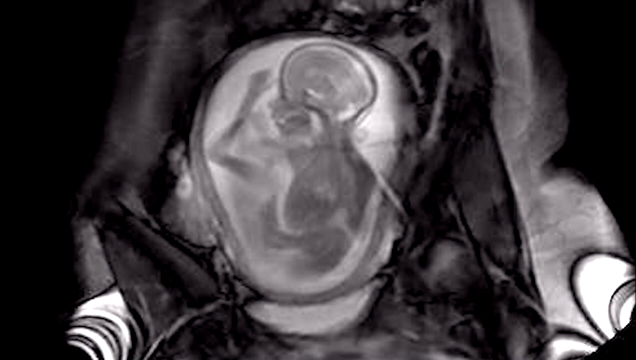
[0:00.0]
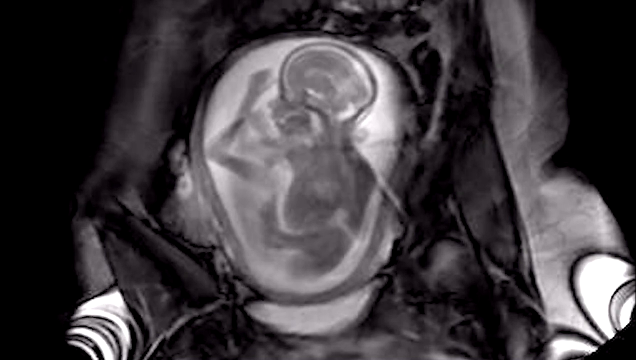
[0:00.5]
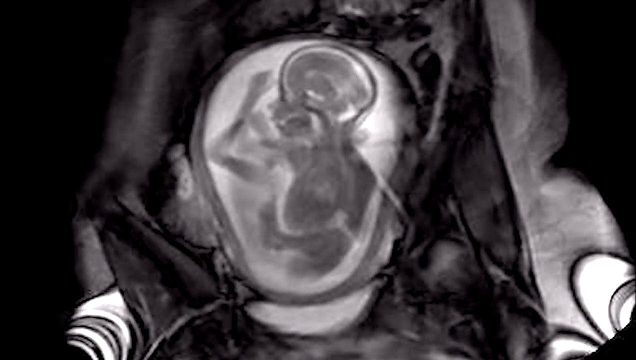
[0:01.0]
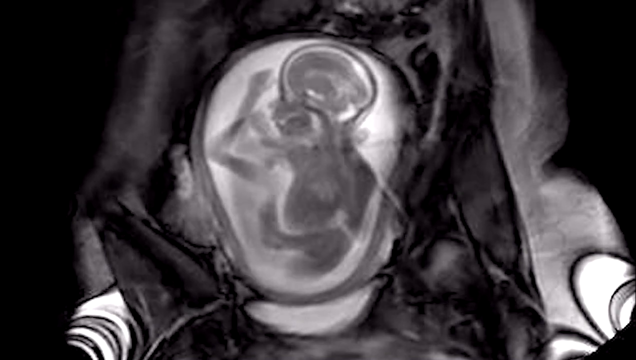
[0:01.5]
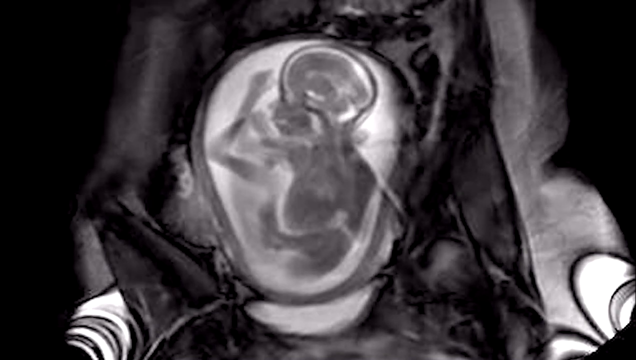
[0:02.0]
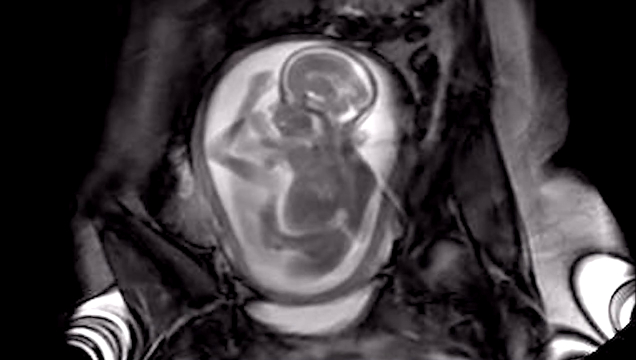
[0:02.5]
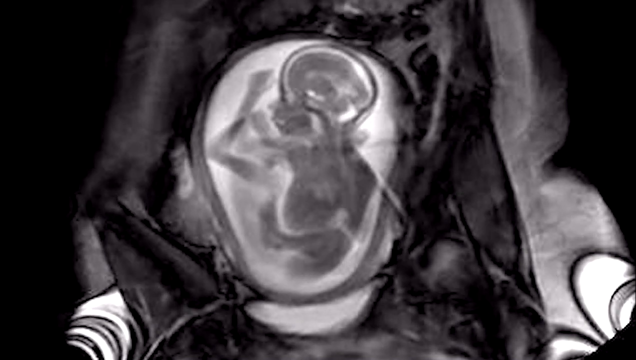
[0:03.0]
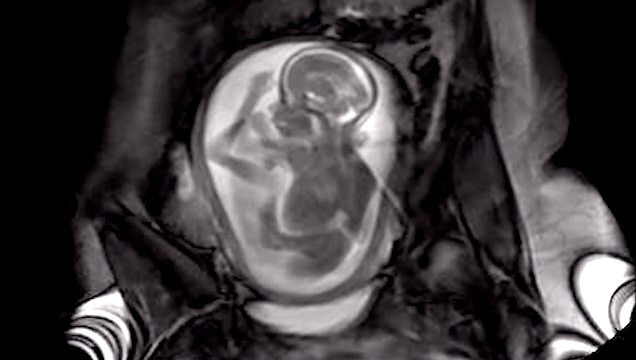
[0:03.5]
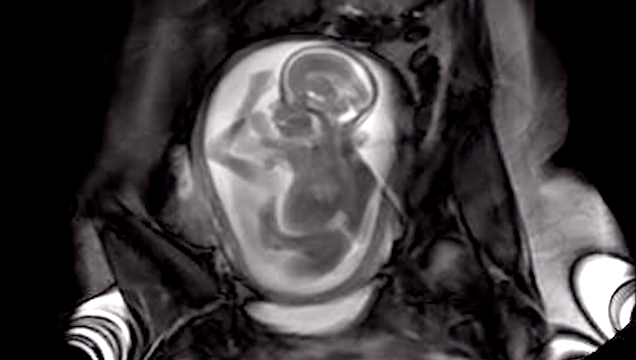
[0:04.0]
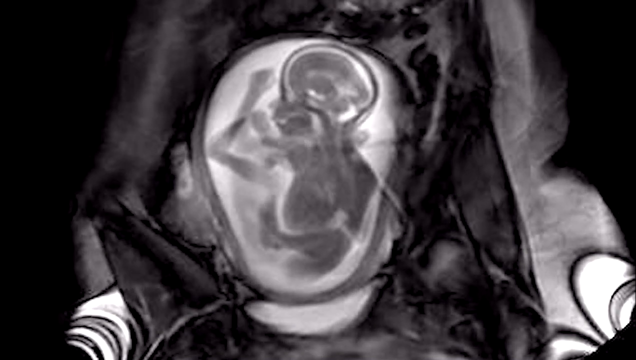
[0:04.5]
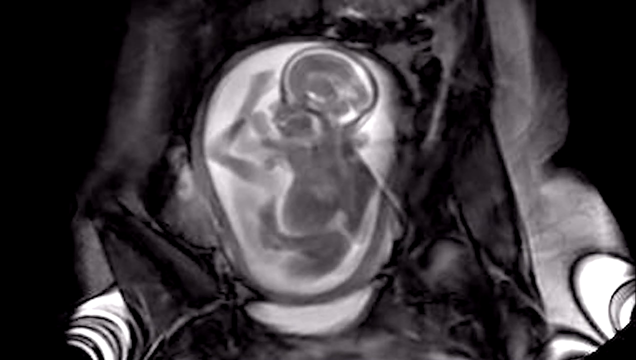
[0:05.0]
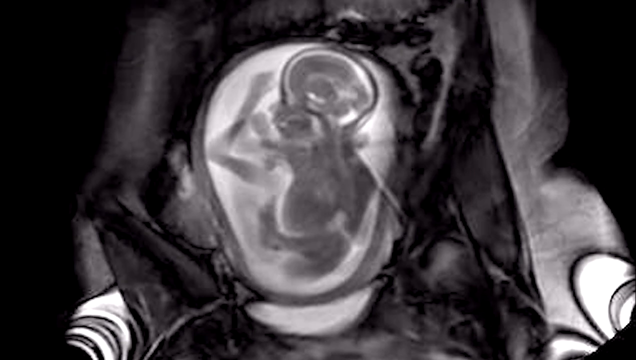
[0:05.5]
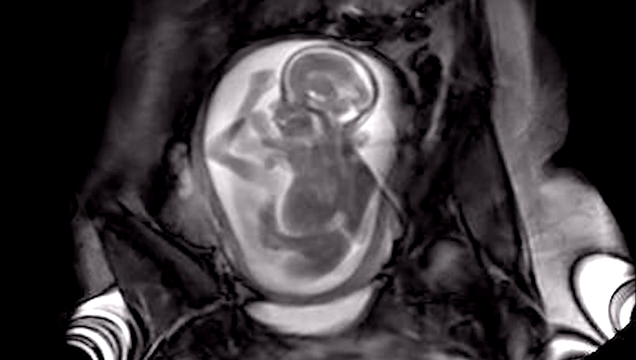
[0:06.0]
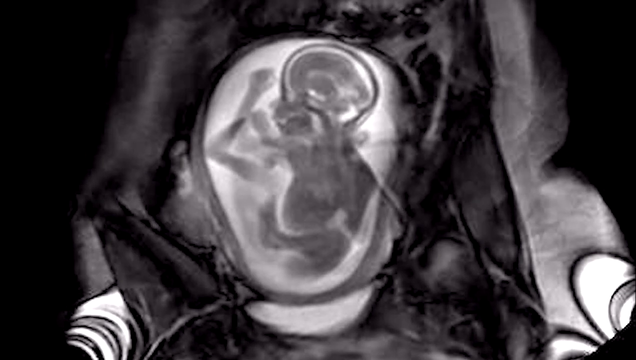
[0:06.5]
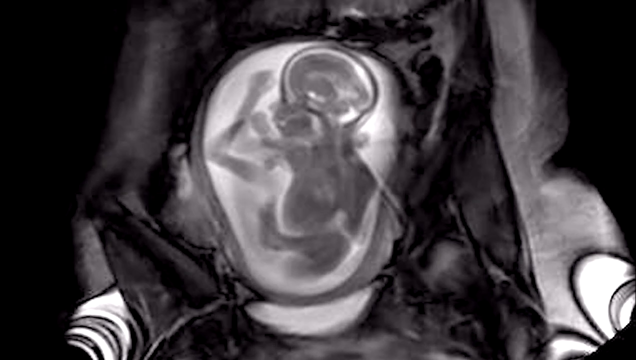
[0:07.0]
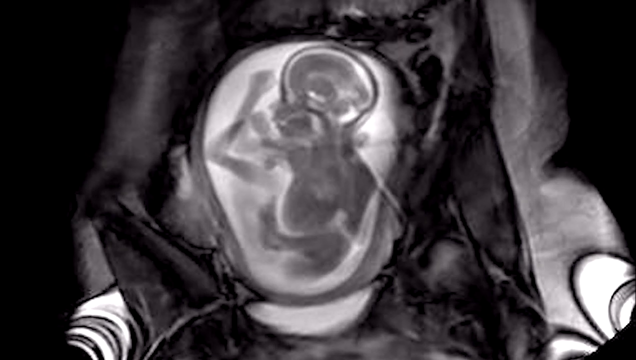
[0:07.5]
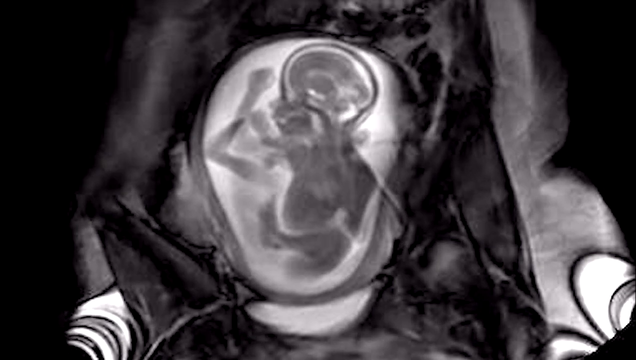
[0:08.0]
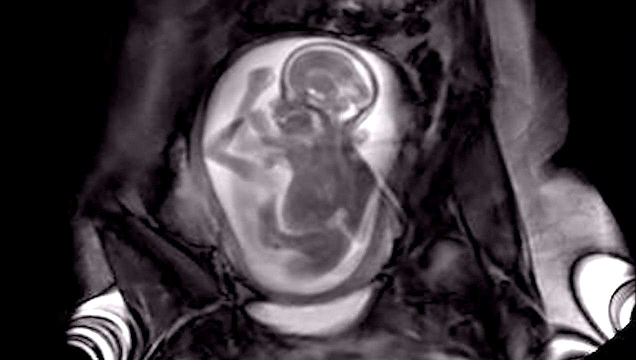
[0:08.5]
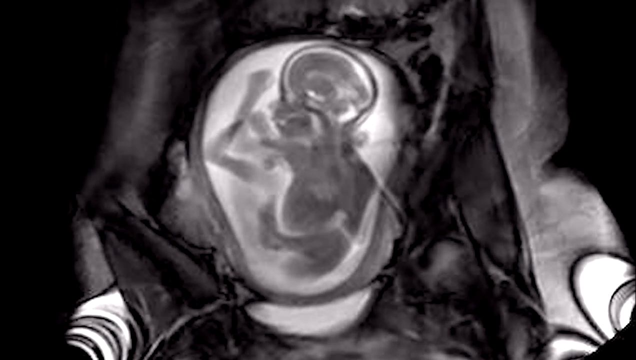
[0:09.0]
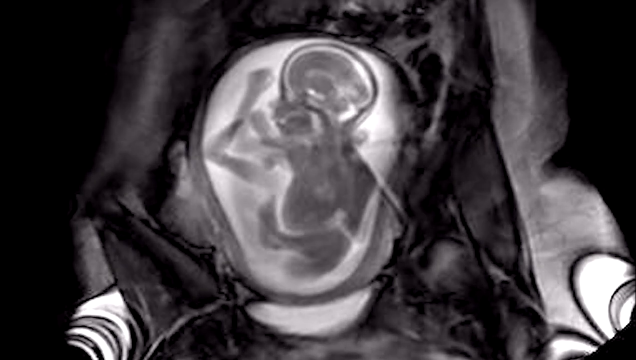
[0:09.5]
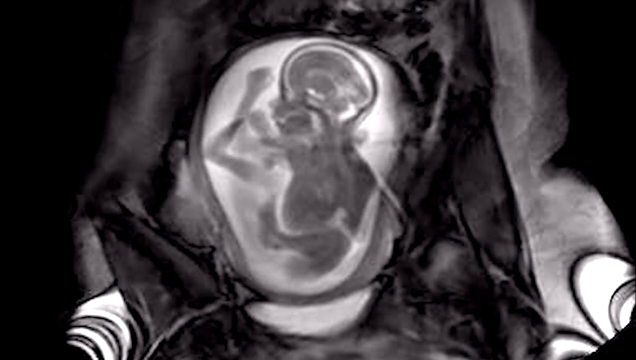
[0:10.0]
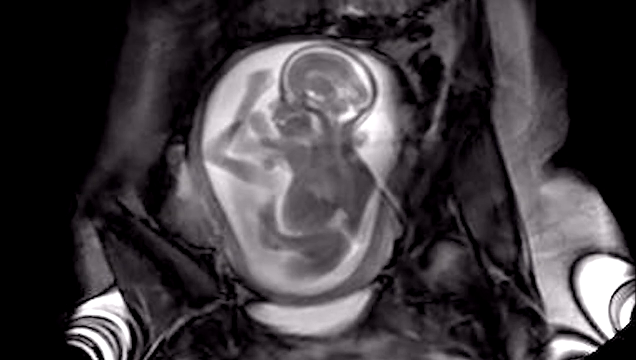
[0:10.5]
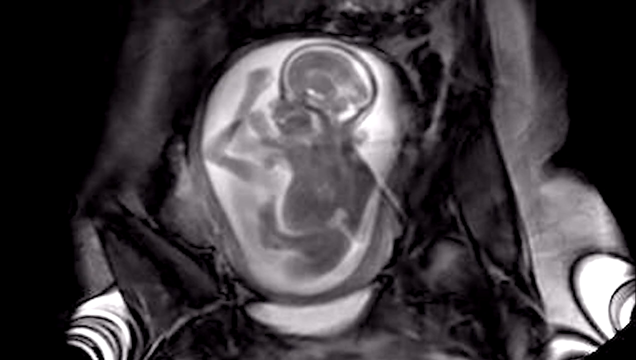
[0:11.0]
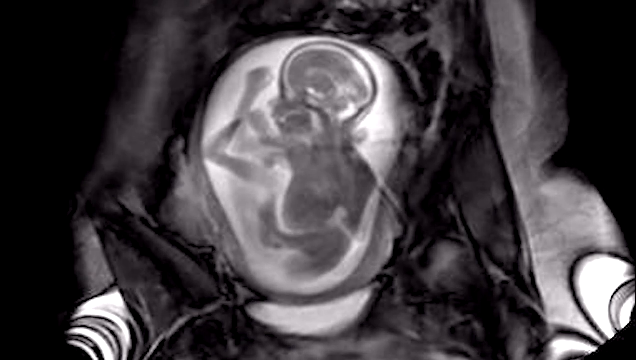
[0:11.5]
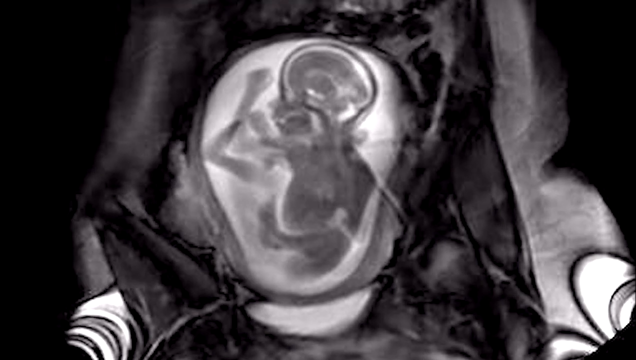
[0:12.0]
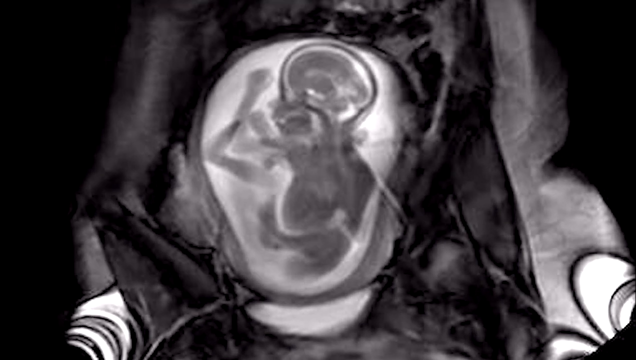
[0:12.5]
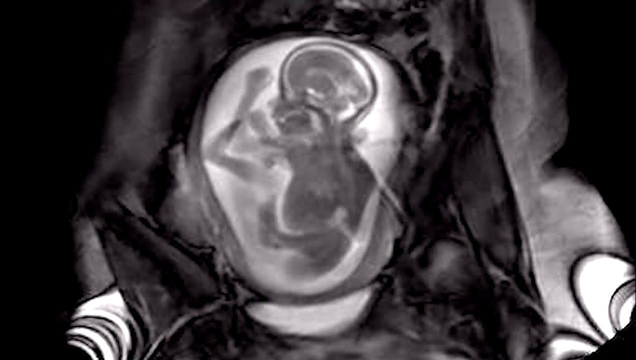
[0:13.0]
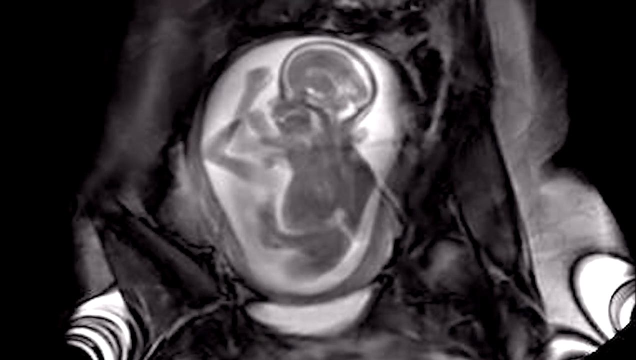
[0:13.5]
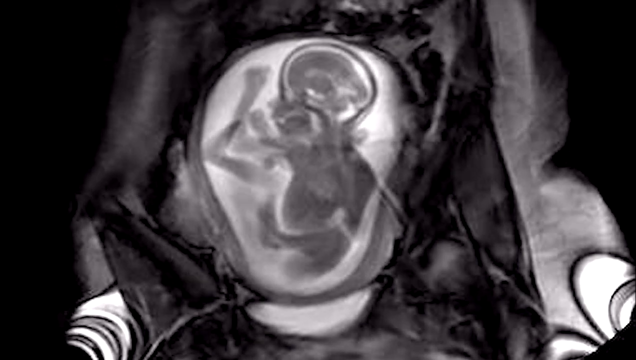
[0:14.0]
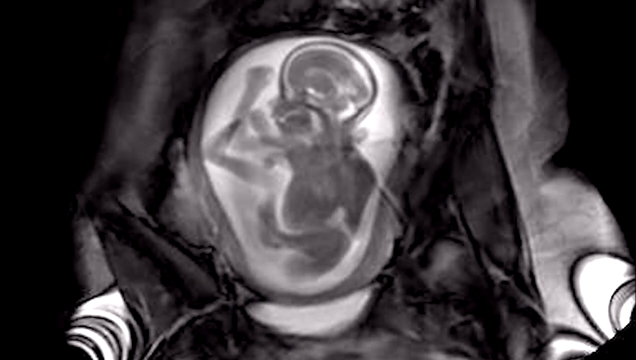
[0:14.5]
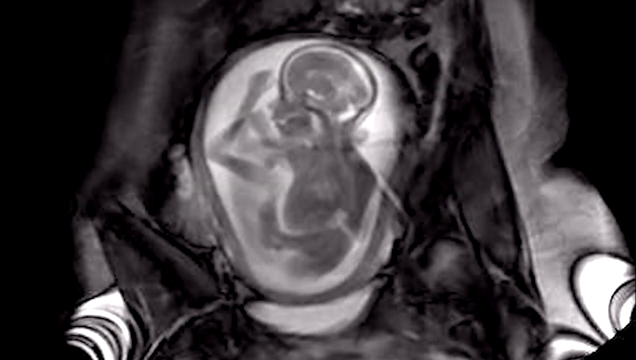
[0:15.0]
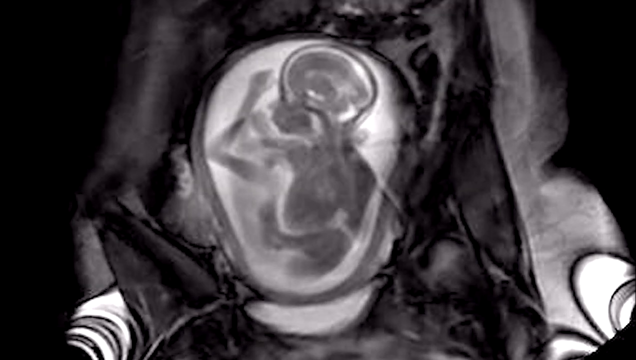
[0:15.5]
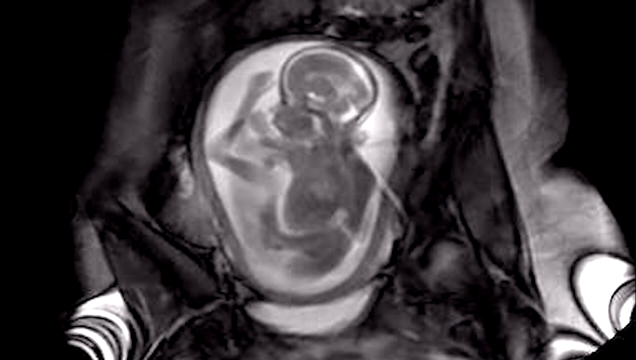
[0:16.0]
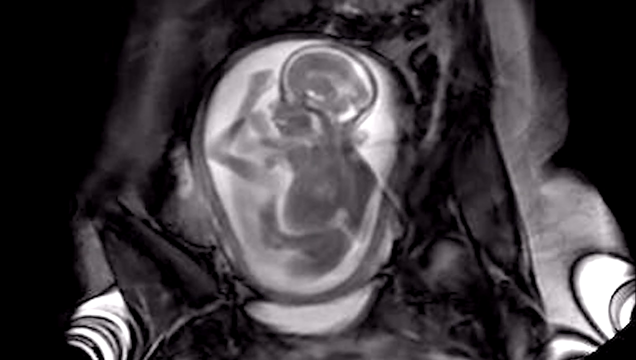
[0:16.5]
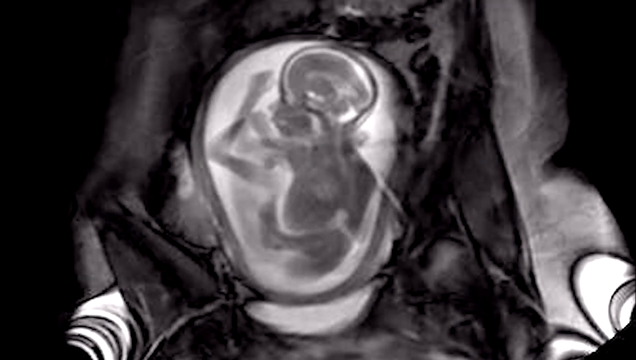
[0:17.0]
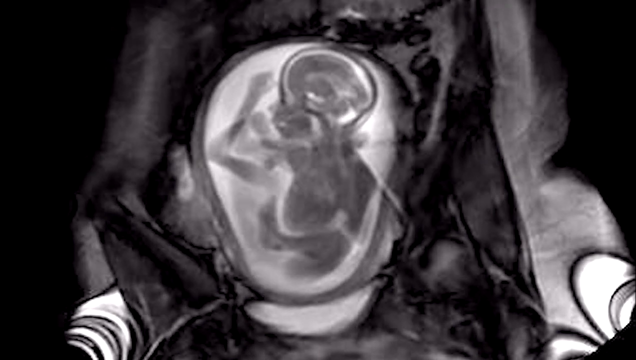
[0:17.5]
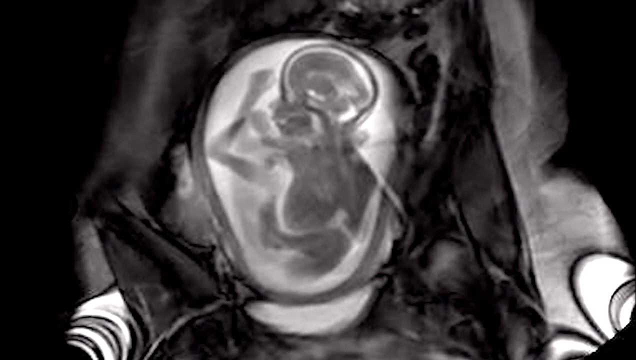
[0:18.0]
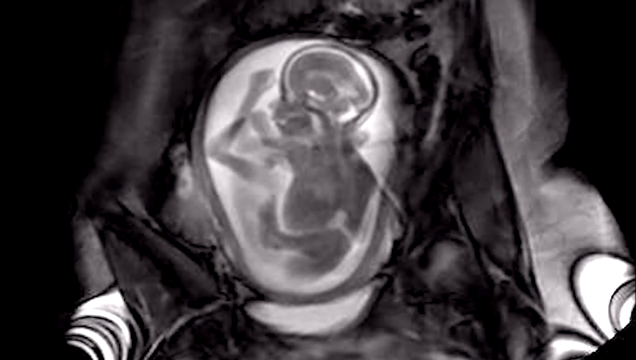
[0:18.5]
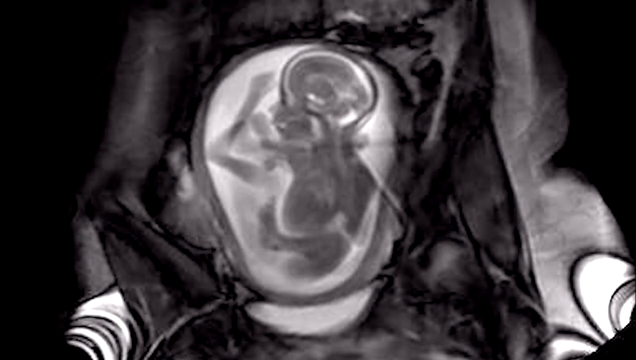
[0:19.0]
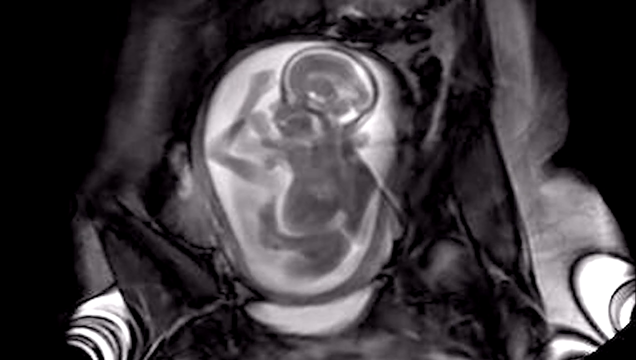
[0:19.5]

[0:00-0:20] What looks to be some kind of scan shows a white blob area with a lot of darkness and shadows surrounding it against a dark background. It appears to be a scan of a baby, possibly in the amniotic sac. The baby's arms and legs are visible, along with some of the baby's organs and other vital organs around it, and the baby is moving slightly. Inside, the baby's brain region has a slight white glow. Some other organs of the mother seem to be visible surrounding the sac as well. An object that kind of looks like a light is in the bottom right corner, and the same object is in the bottom left corner.